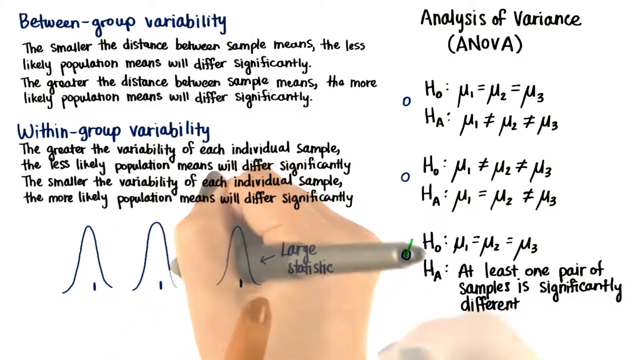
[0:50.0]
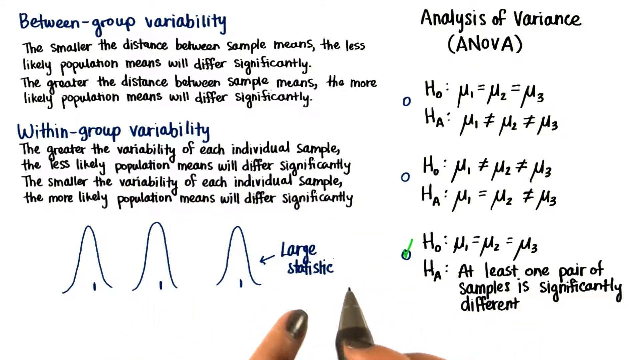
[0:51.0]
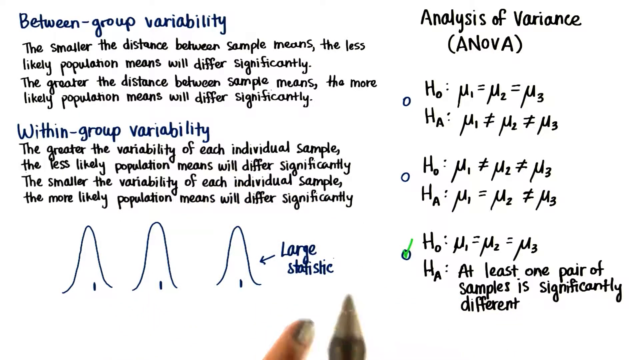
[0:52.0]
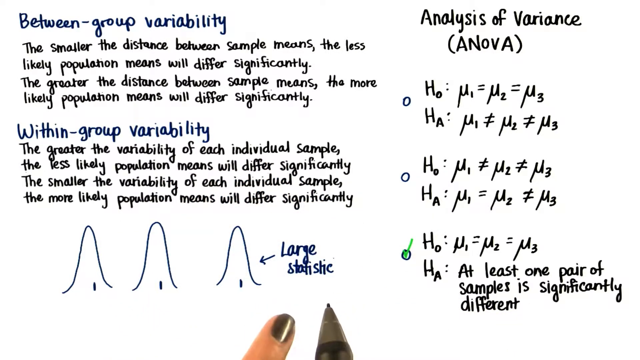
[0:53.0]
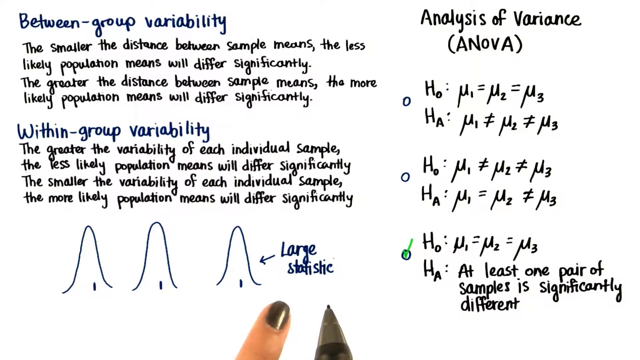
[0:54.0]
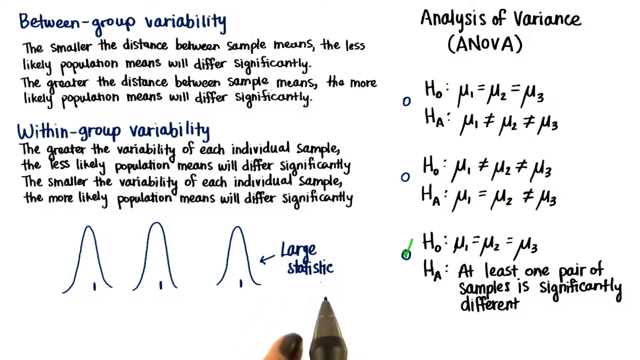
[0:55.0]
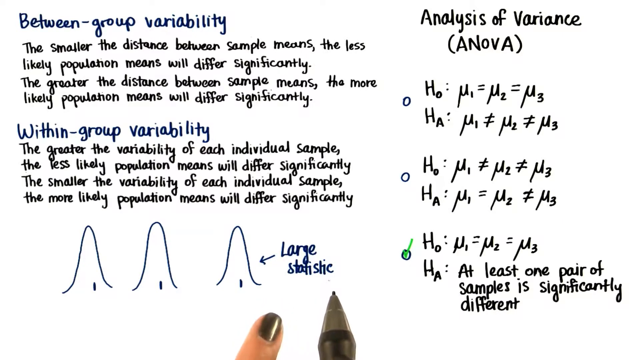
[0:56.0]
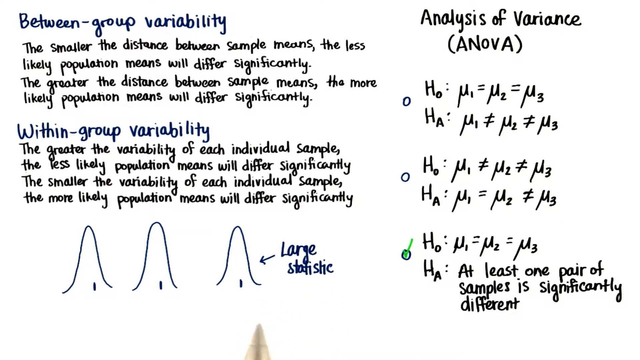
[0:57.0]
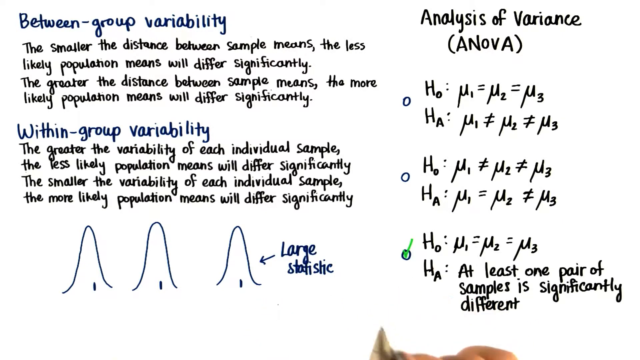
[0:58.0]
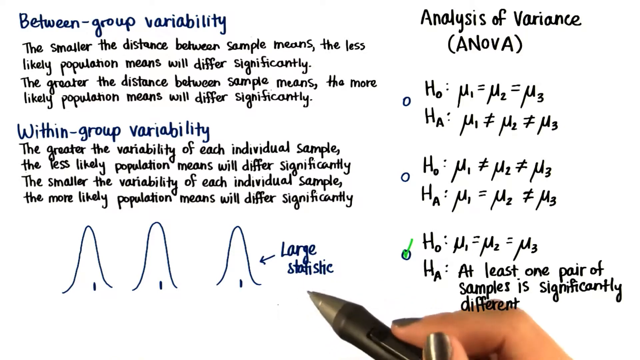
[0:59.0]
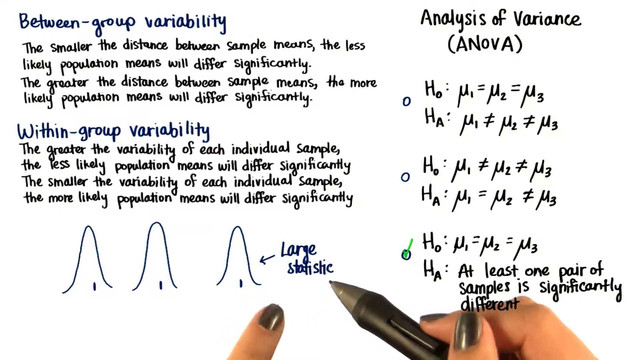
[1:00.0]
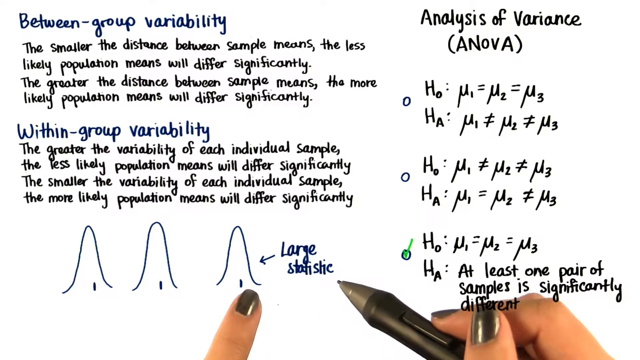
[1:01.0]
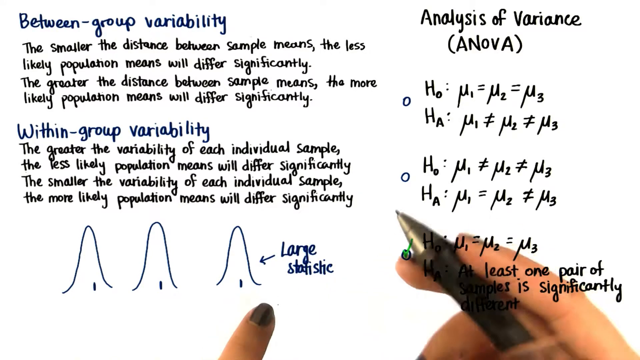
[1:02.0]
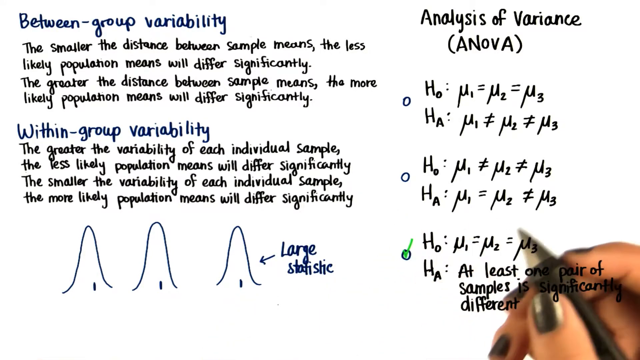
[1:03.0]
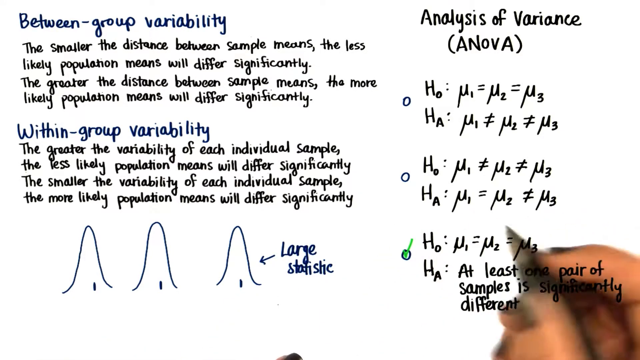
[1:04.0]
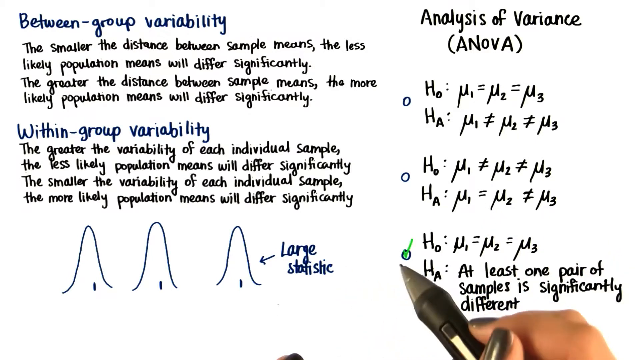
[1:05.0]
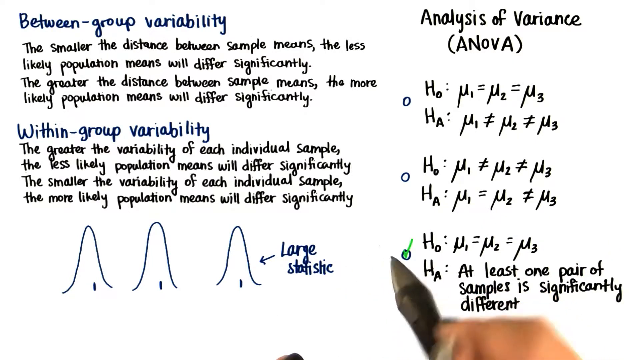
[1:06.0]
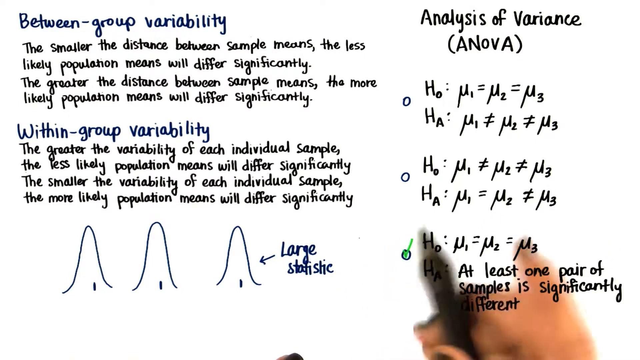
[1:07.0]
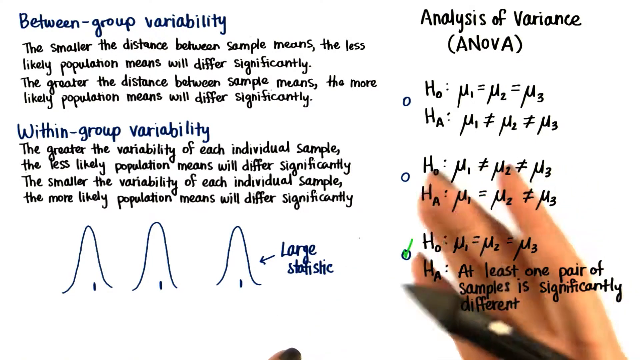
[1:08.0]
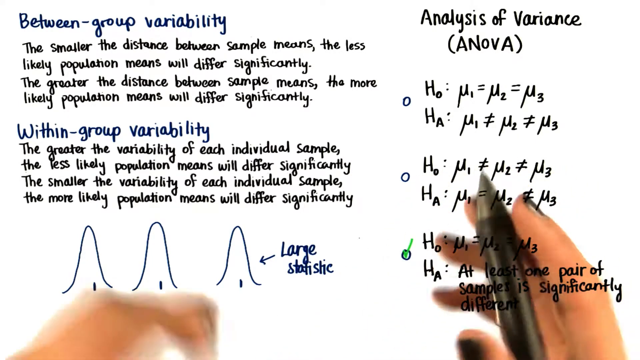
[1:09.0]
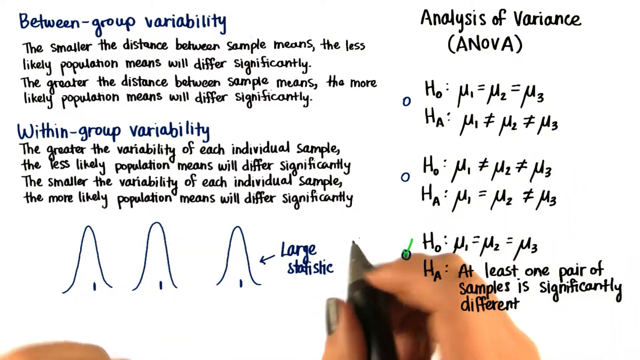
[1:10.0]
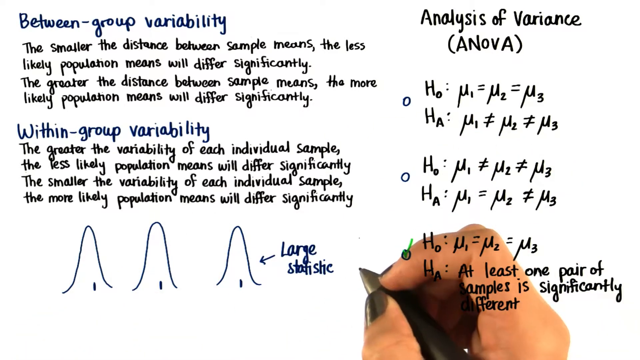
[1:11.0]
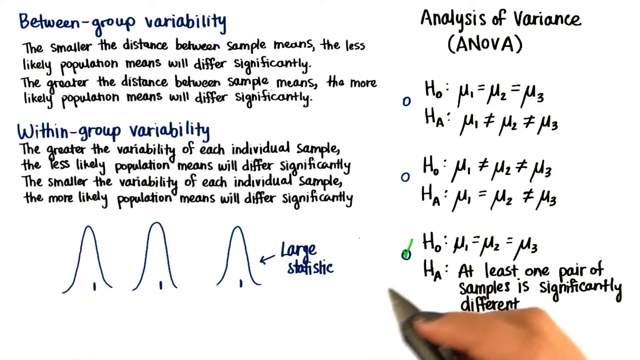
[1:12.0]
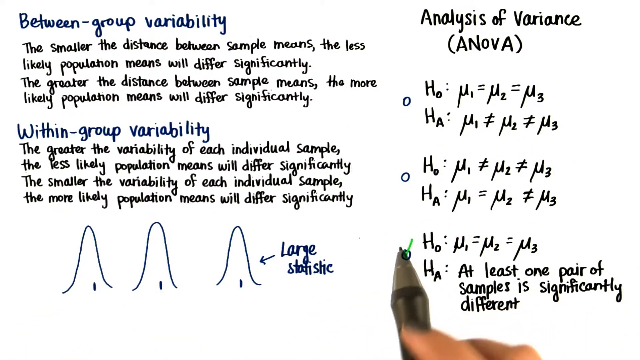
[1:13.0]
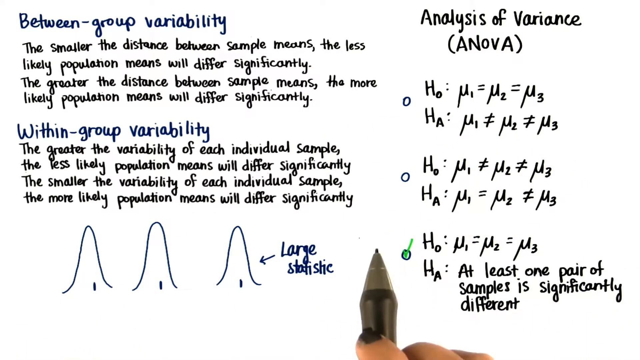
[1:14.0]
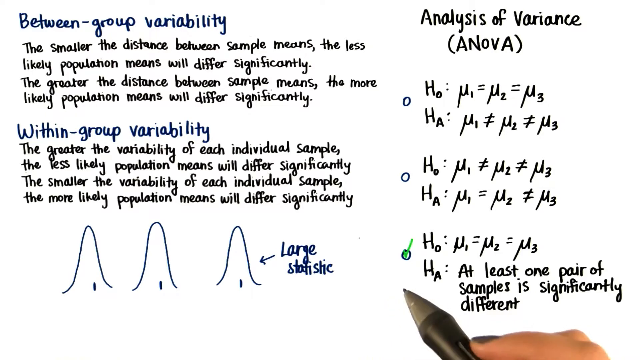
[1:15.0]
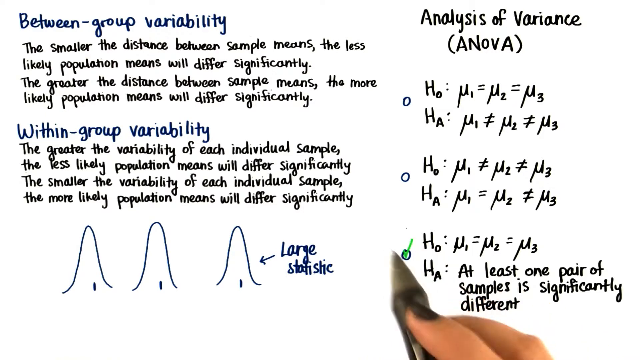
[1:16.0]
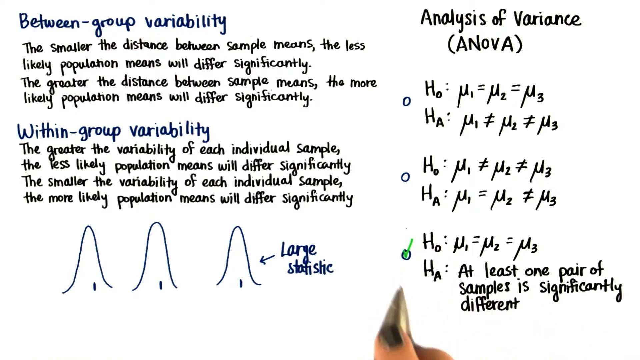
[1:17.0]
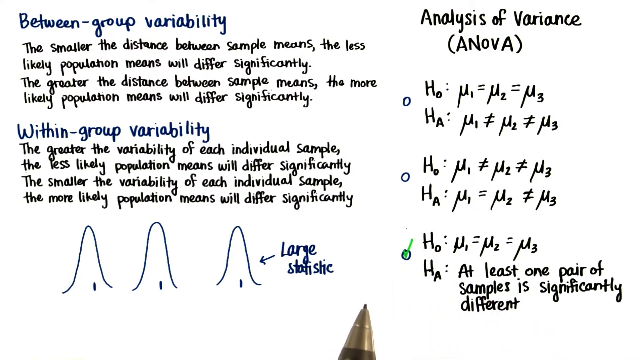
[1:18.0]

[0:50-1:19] The person continues drawing curved lines above the small lines. After they draw the second one, the screen fades and a third curved line has appeared above the last small line, making three curved lines going up and down. A small arrow points at the rightmost curved line, with the words "large statistic" right beside the arrow in blue. They move their hand downward and point below the "large statistic" text with both their marker and their finger, moving their hand around a little before the screen fades. When it comes back, the hand moves to the right of the screen and then points at "large statistic" again with the pencil and finger, with a little more of the hand now visible. After some small movements, they move the hand to the right and then back to the area of the green checkmark. They make hand gestures, opening their hands in quick movements, before a fade, after which they circle their hand around the green checkmark area, continuing small movements around that area at the bottom of the screen until the video ends.